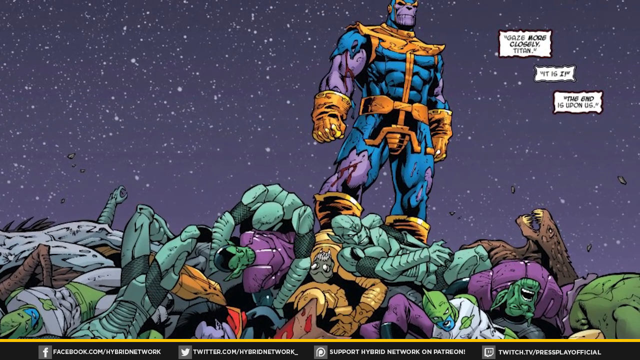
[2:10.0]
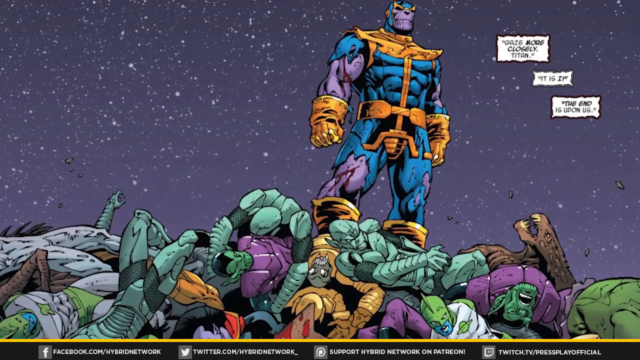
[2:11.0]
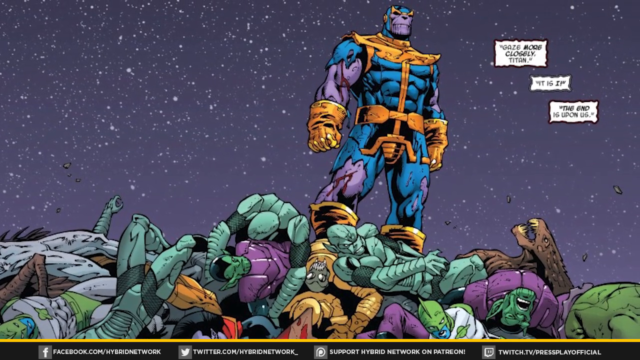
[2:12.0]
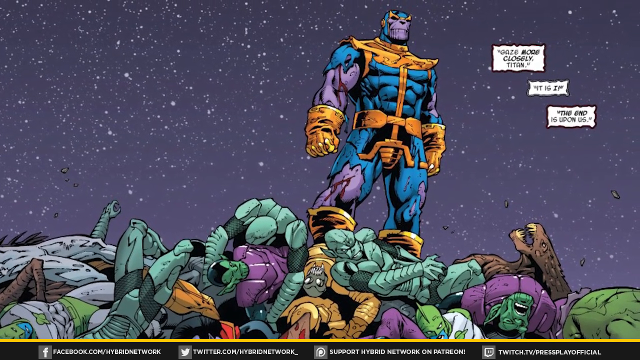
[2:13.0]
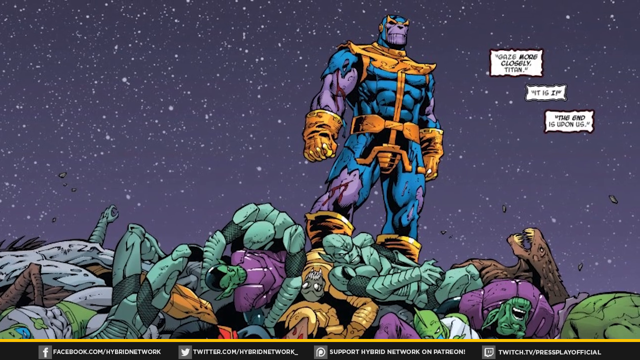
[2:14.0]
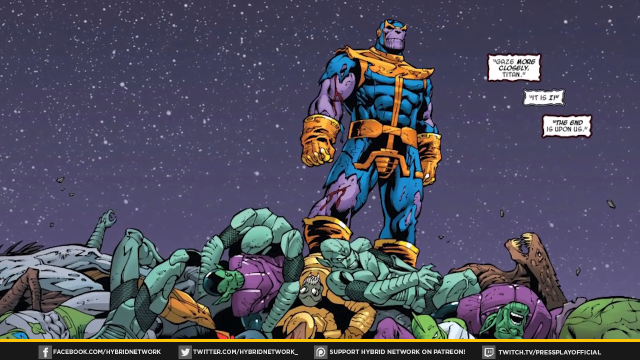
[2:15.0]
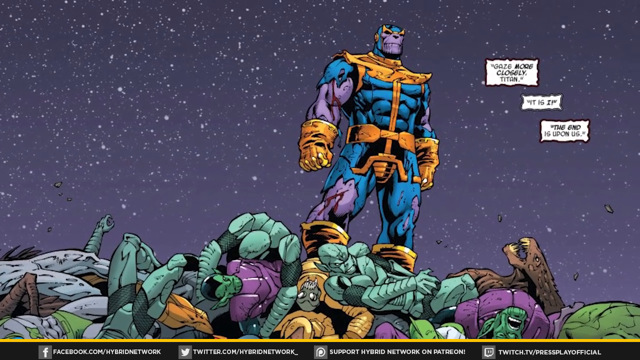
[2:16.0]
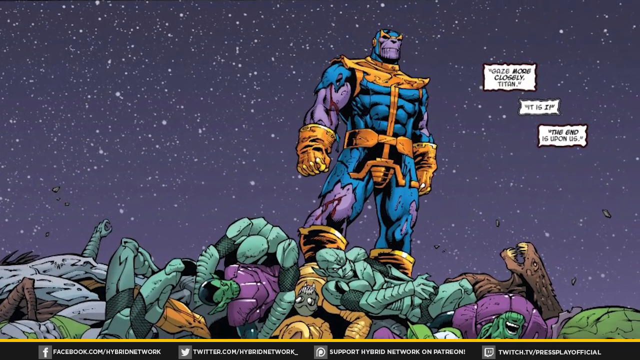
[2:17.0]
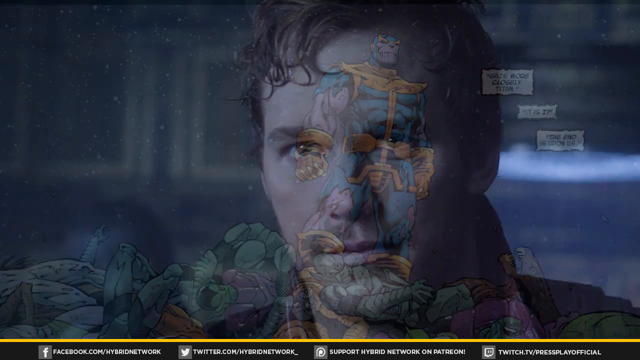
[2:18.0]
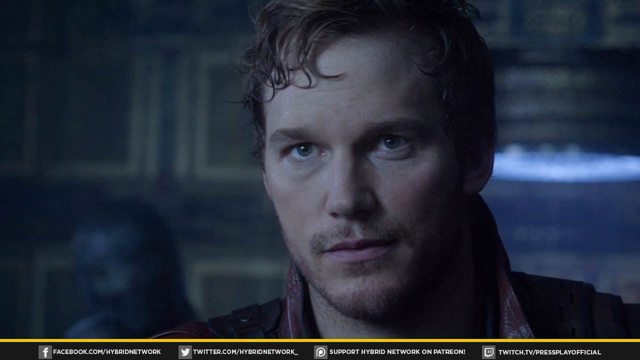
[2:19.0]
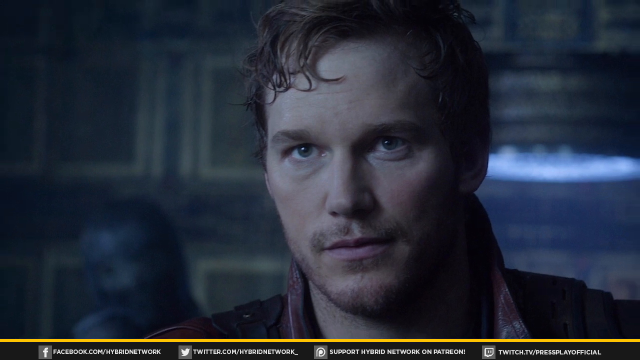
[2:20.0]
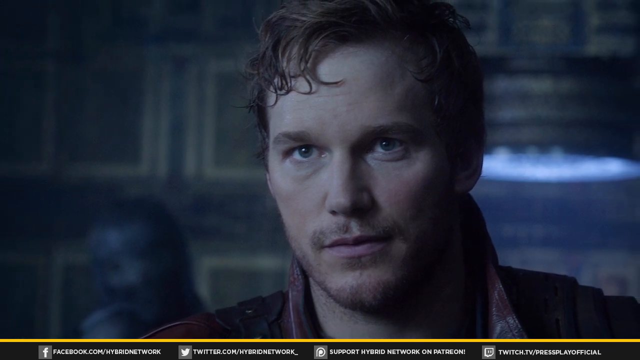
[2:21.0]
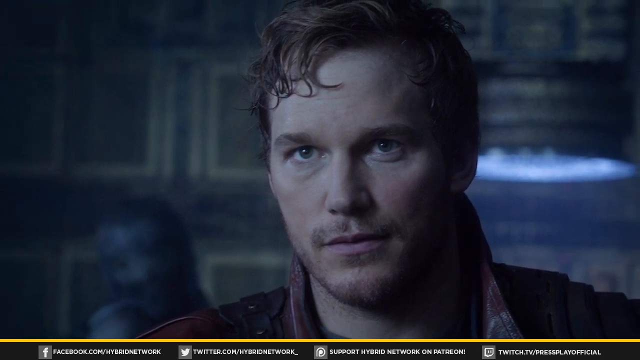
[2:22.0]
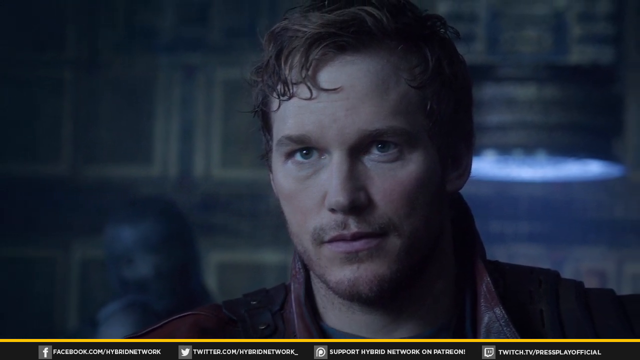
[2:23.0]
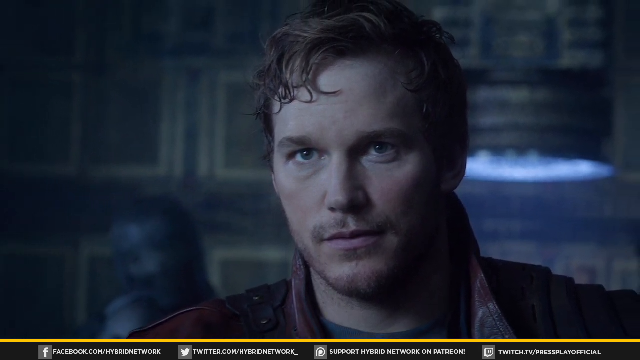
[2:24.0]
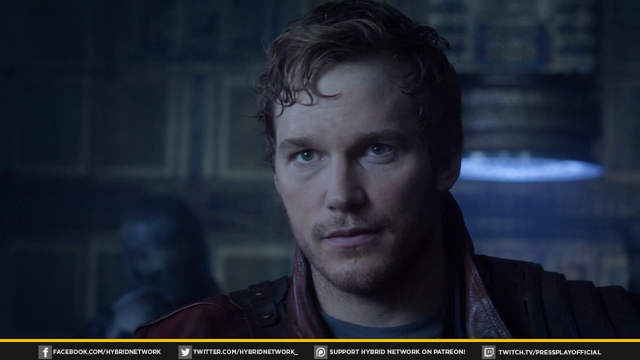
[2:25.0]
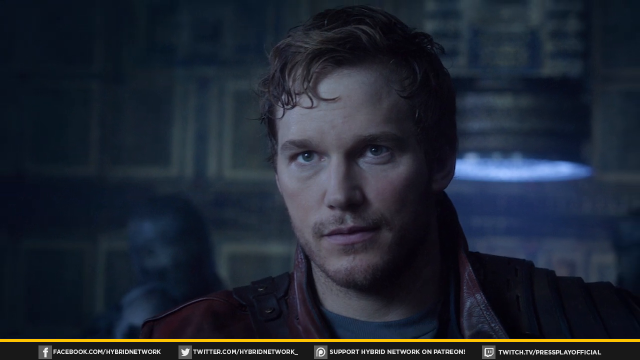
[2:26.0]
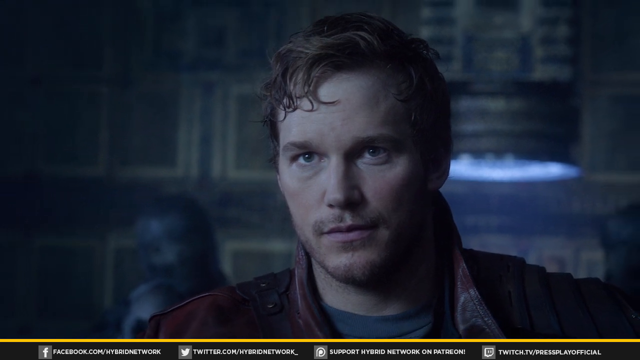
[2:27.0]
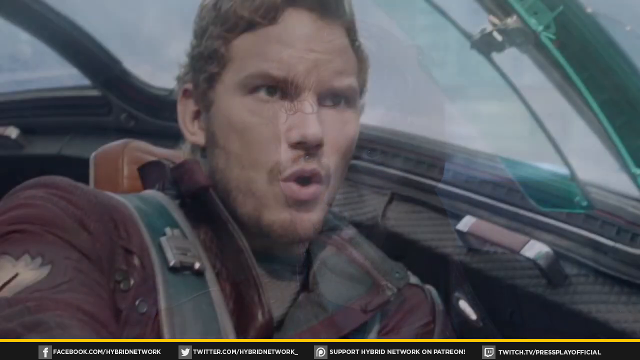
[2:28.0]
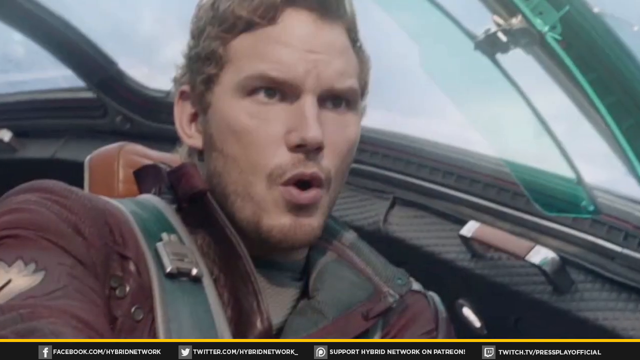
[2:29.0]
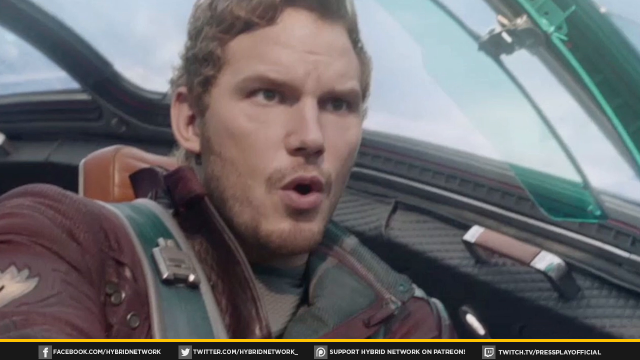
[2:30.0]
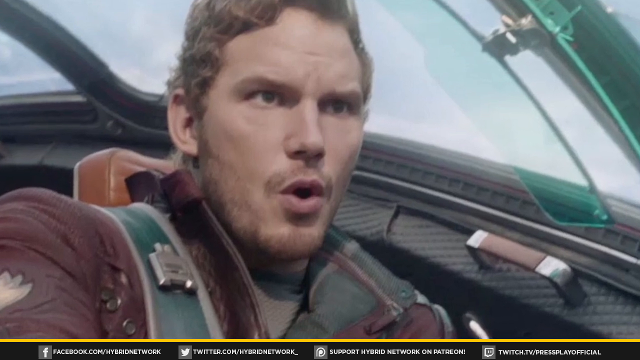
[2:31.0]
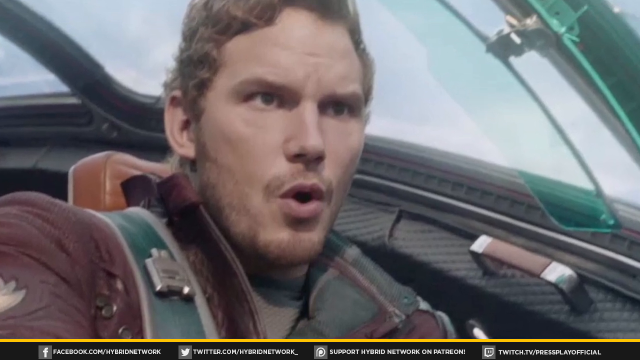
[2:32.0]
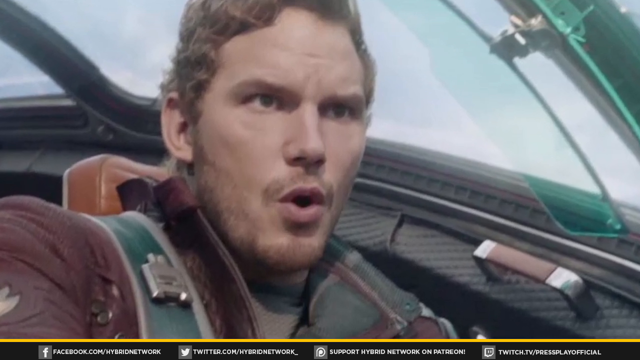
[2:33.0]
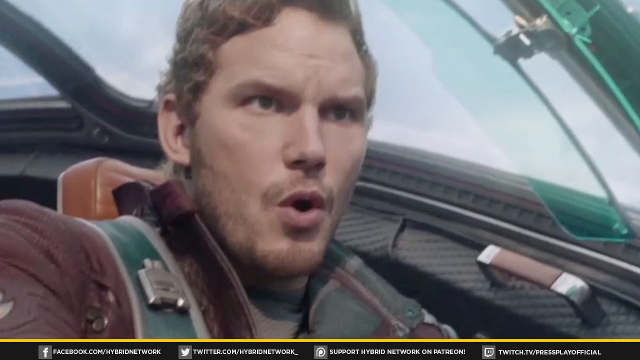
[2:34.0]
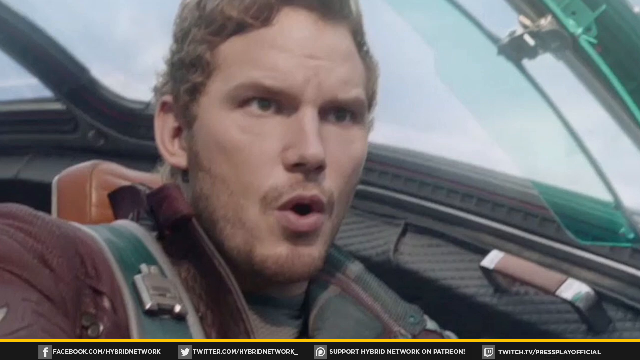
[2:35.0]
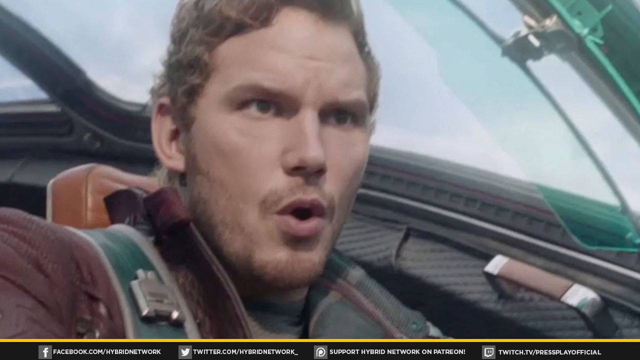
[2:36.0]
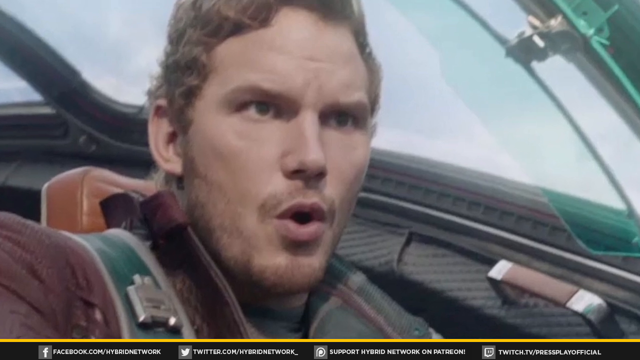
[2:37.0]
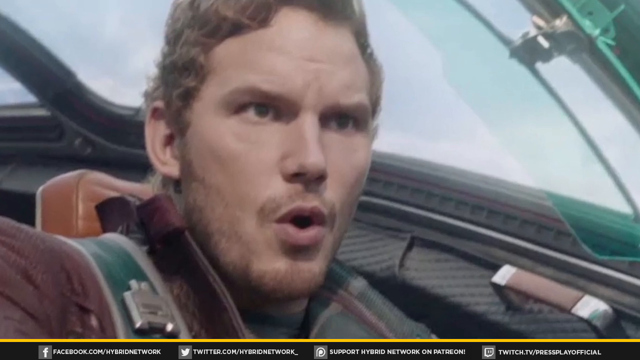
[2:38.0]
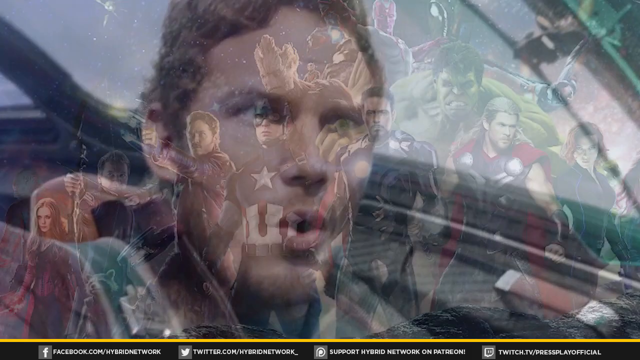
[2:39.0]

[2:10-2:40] An image appears to be from the comic Guardians of the Galaxy, possibly. Toward the right are three comic-style boxes with black text that is a bit too blurry to make out; one of them looks like it says "the end is upon us", and the other two are too blurry. The background is bluish black with white stars. More toward the right is a towering purple muscled figure in a ripped-up blue and gold costume with gold gloves, standing on top of a pile of bodies. The monster bodies below are gray, gray-green and blue, green and purple, and gold and gray, a whole bunch of bodies. Toward the right there looks like a dead, kind of dragon-like, werewolf-like hybrid creature. The image lingers for a little while. A banner runs along the bottom that looks like it lists various social media connections or sites. After the comic, what looks like Chris Pratt's character appears in a real photograph or still from the movie Guardians of the Galaxy, with a blurred, kind of futuristic background behind him. The camera pans out, and then there is a shot of his character in what looks like a kind of futuristic airplane. The camera pushes in on that image, and then there is a very brief glimpse of what looks like a group of superheroes from different IP universes gathered together before a cut.